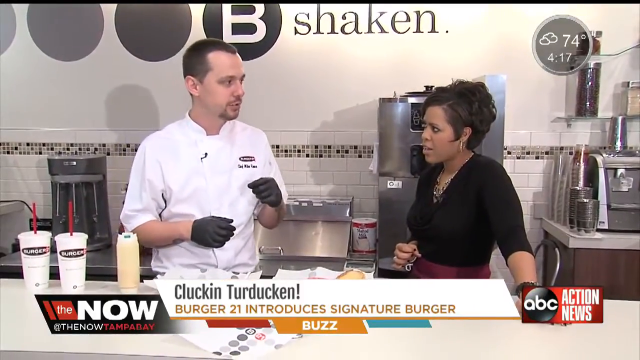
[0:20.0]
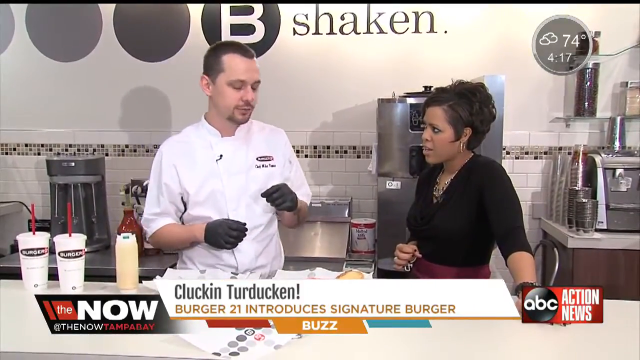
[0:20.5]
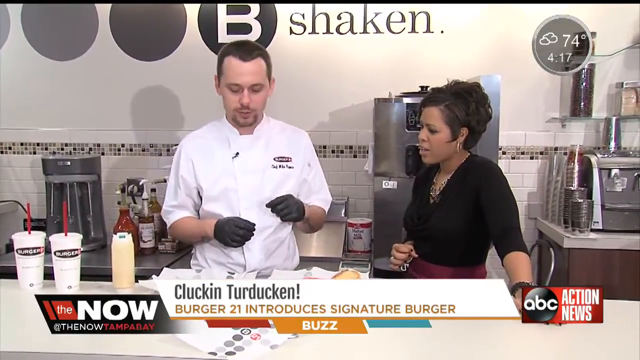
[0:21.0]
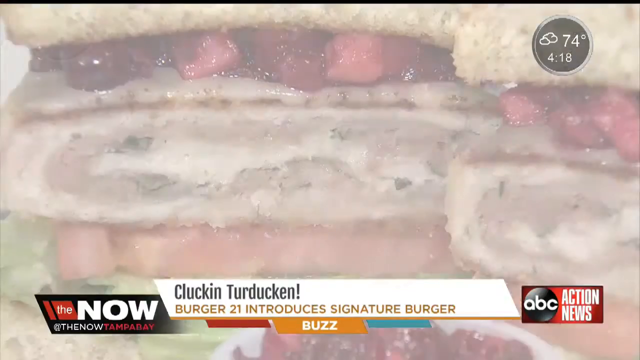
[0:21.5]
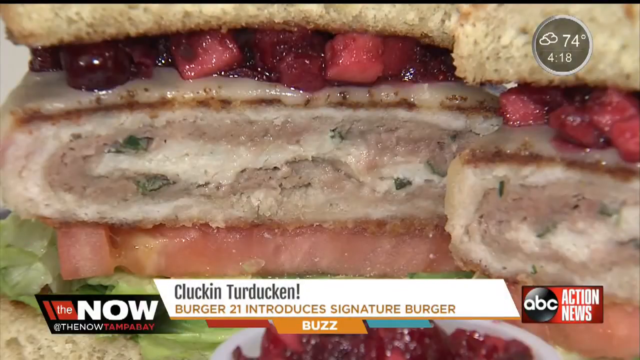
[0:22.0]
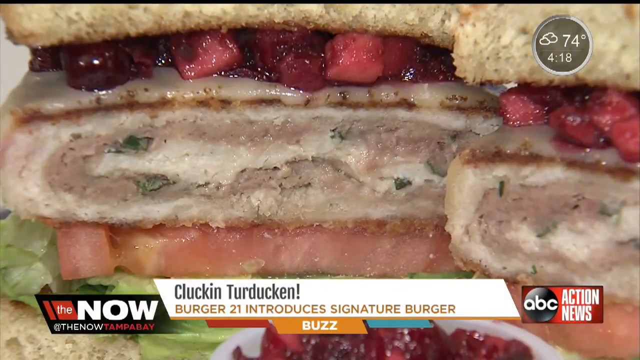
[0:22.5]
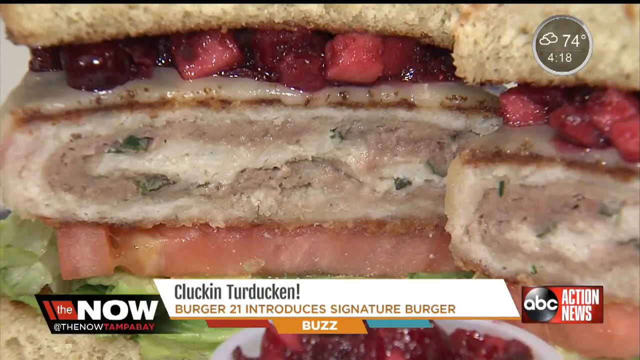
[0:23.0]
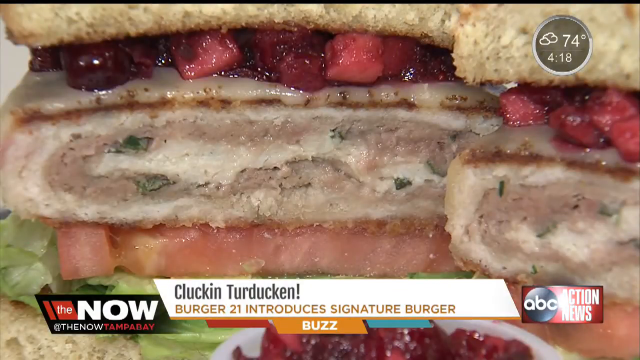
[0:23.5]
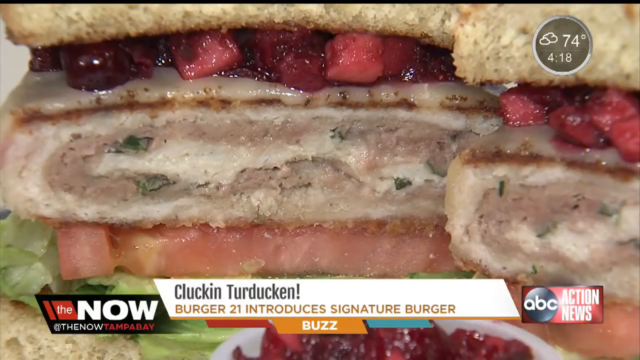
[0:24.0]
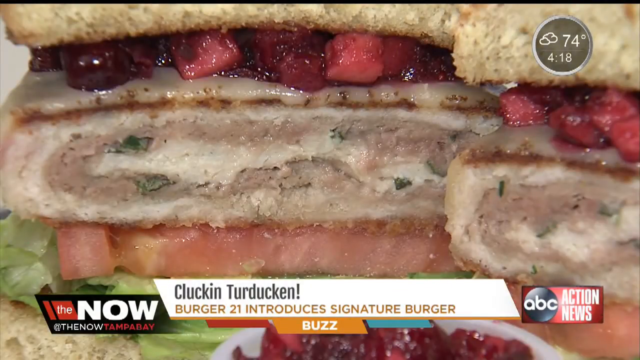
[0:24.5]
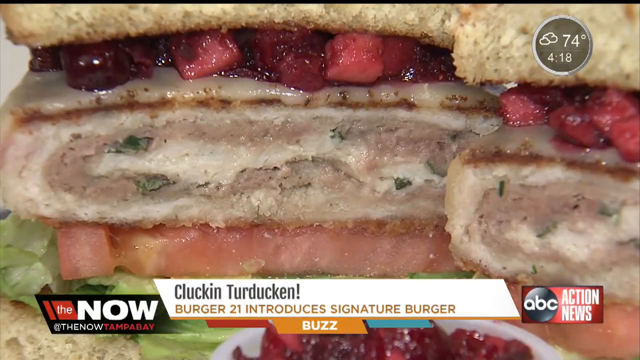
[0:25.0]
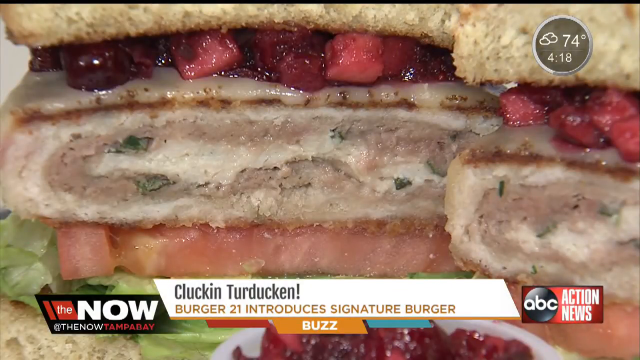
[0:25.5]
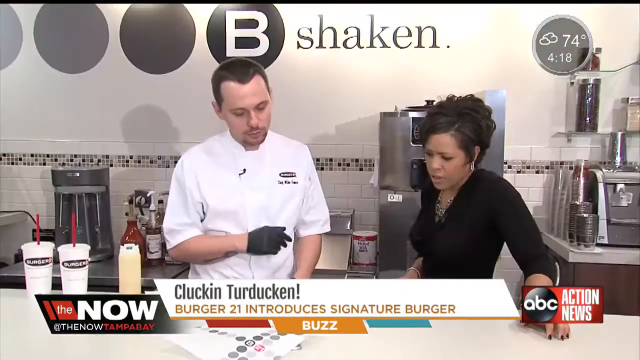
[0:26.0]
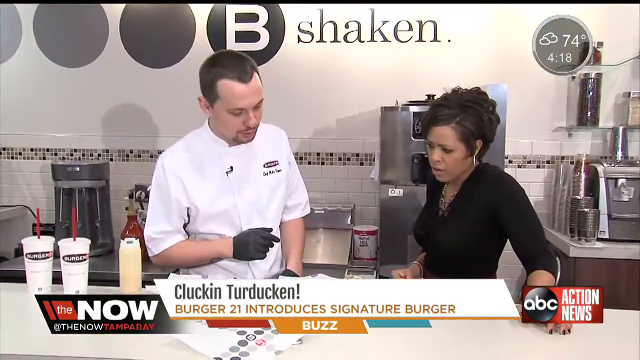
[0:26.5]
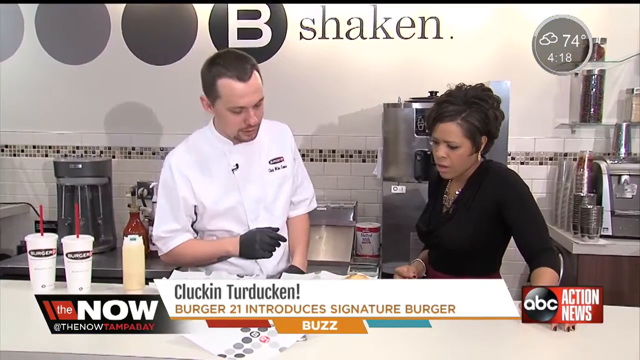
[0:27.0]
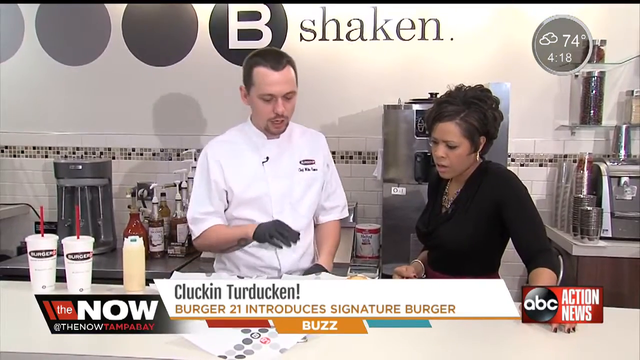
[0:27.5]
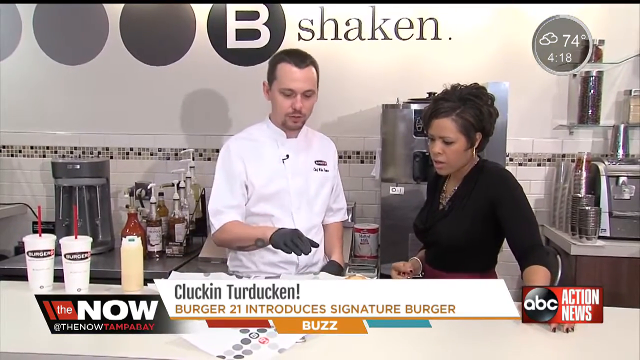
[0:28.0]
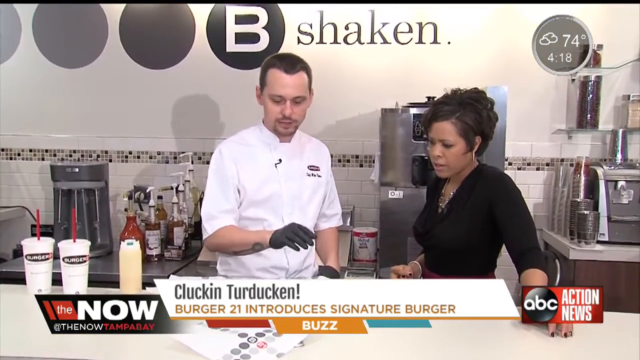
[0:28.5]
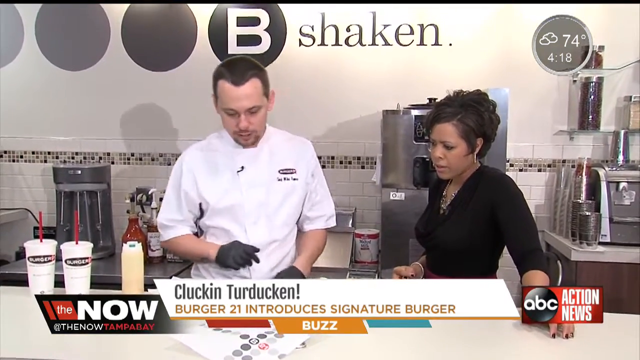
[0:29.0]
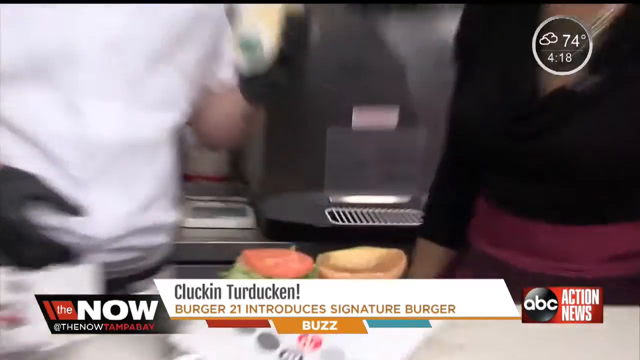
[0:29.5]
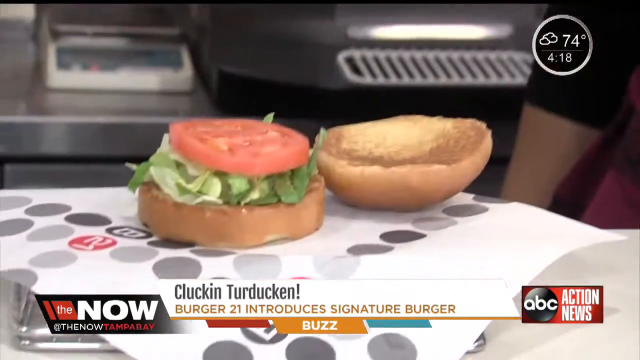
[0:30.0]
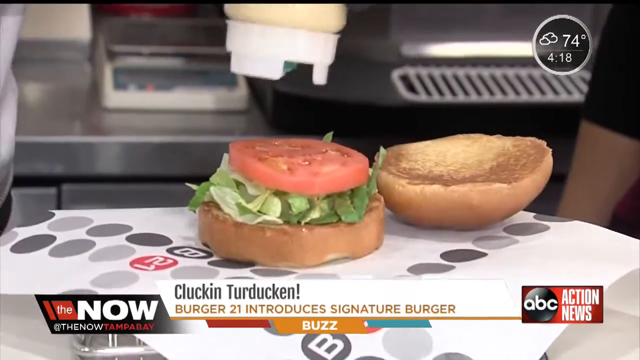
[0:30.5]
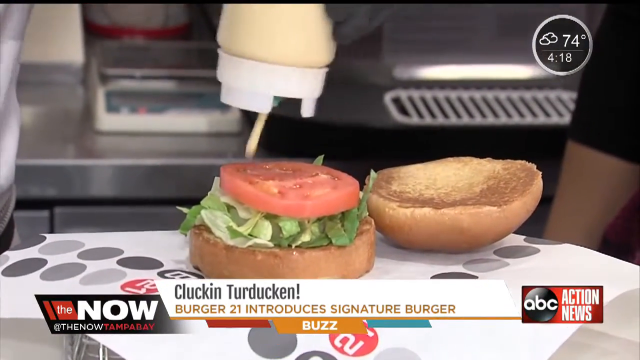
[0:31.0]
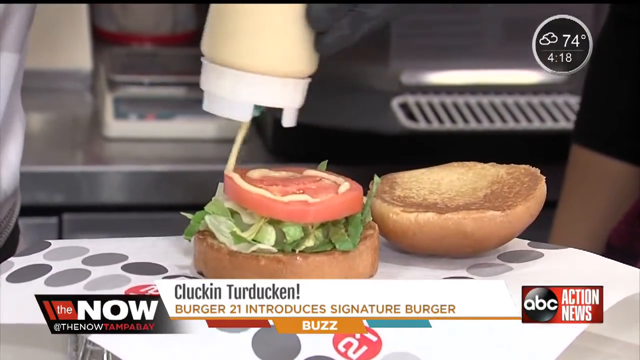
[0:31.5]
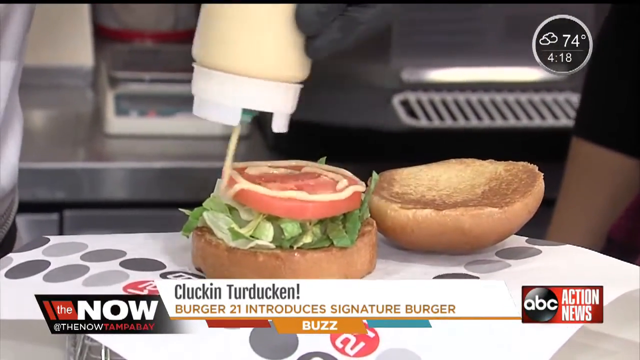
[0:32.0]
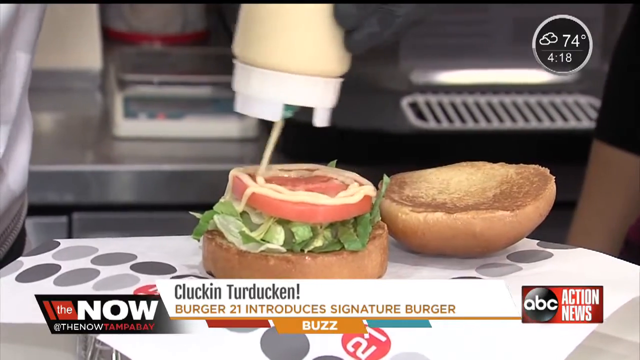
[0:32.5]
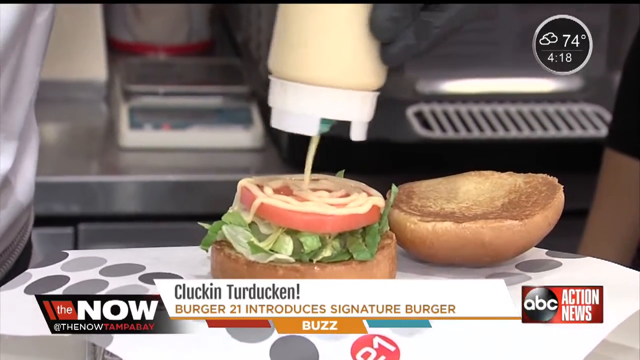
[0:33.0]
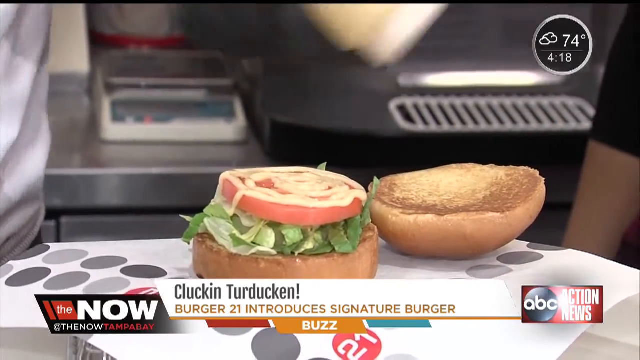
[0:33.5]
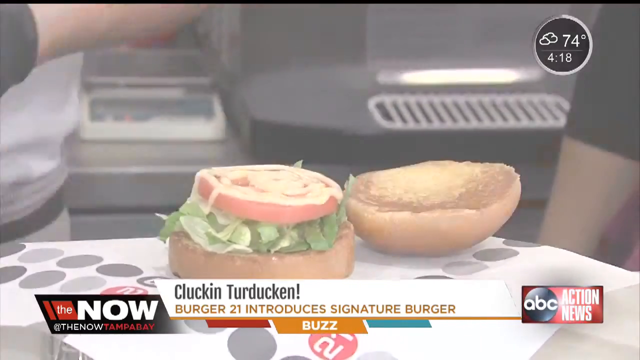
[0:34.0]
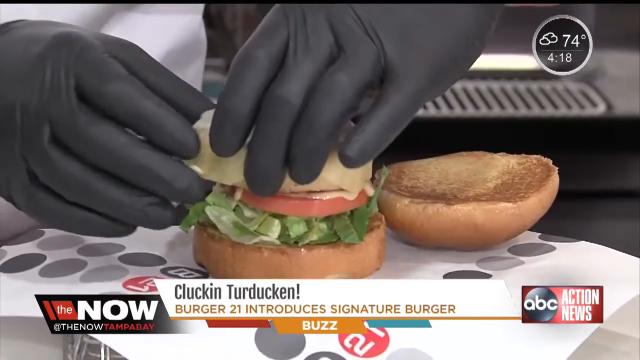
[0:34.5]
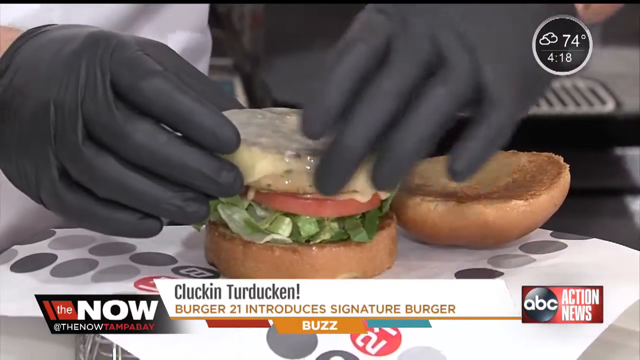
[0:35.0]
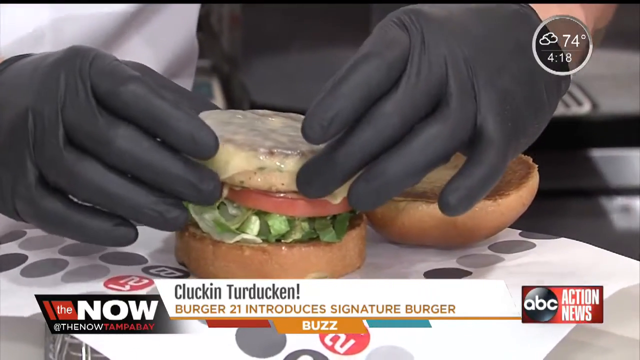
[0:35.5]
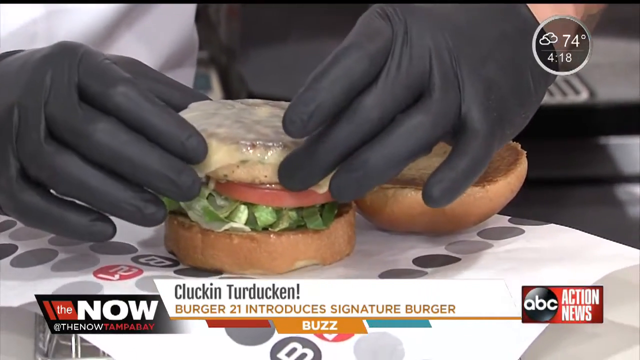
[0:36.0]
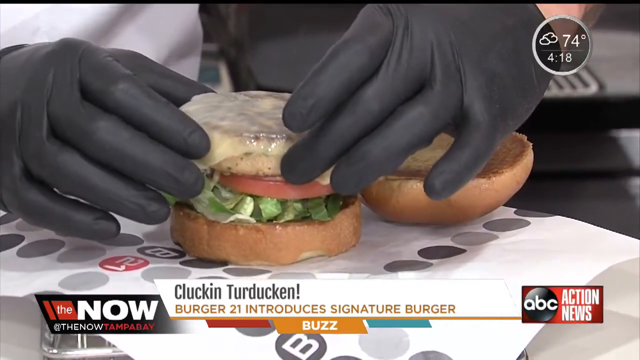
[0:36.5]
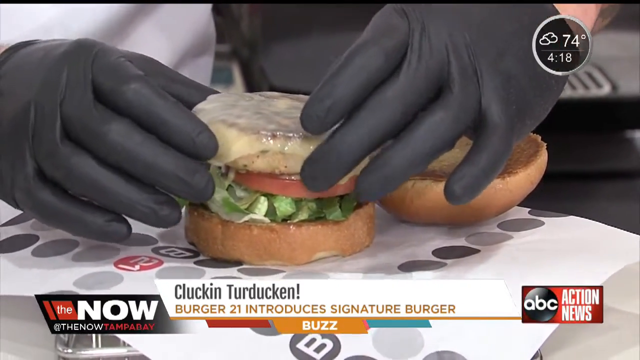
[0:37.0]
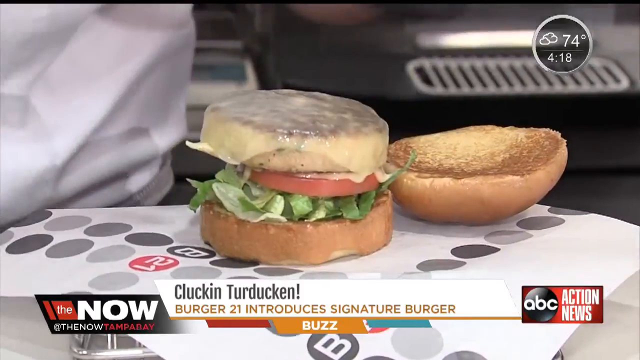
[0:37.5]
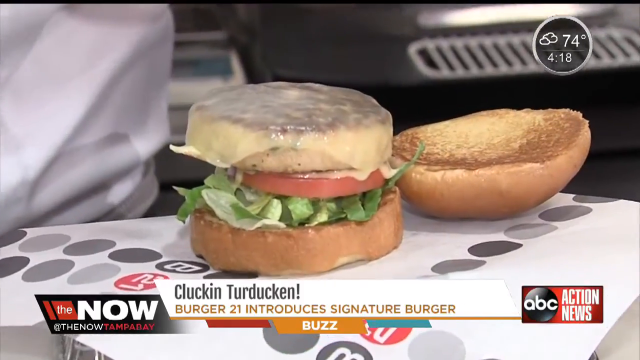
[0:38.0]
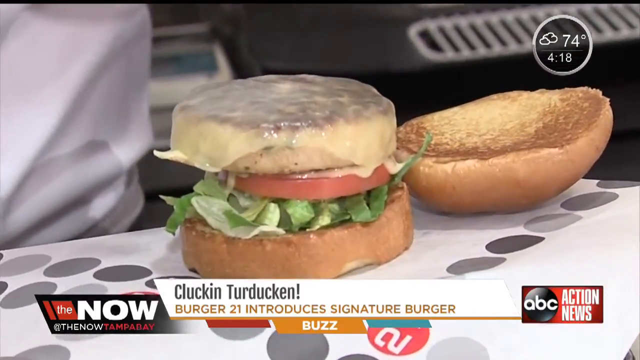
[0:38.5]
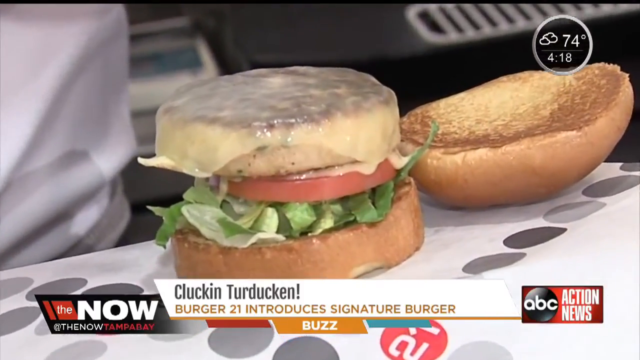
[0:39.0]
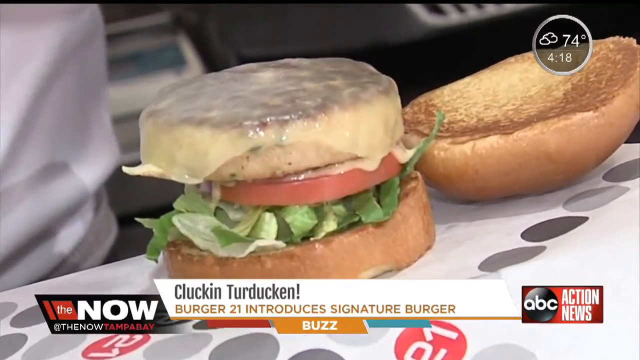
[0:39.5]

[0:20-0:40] A chef and a lady are shown. Behind them the word "shaken" is written, along with all sorts of cooking equipment. Next to the chef is a bottle of sauce, with two cups with straws next to the sauce. The chef wears black gloves and is busy explaining something to the lady, who listens attentively. A close-up shows a burger with lettuce, tomato and some pieces of meat visible on it. The chef explains something to the lady again. On the table is a burger in the making, apparently the signature burger: a roll, lettuce and a tomato. The chef pours a sauce on top of the tomato and then places a patty on top of the tomato with the sauce.